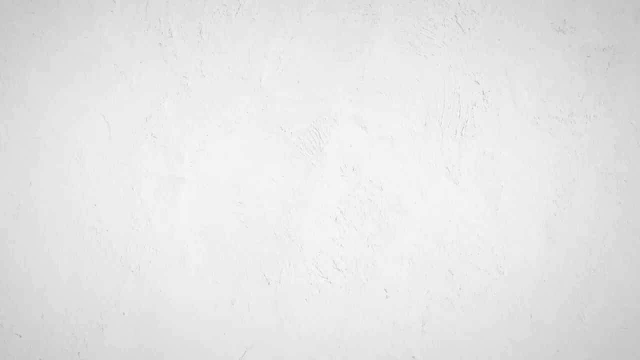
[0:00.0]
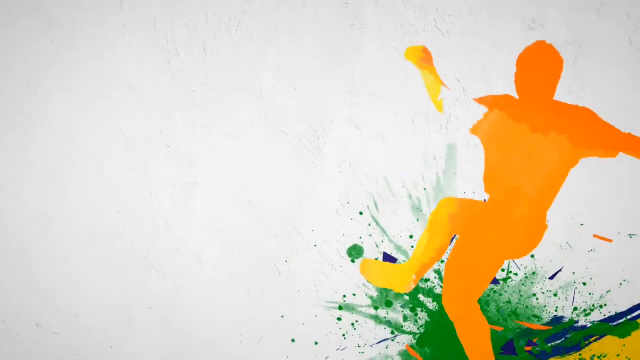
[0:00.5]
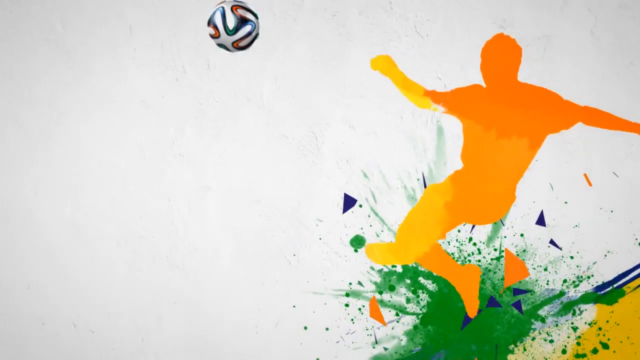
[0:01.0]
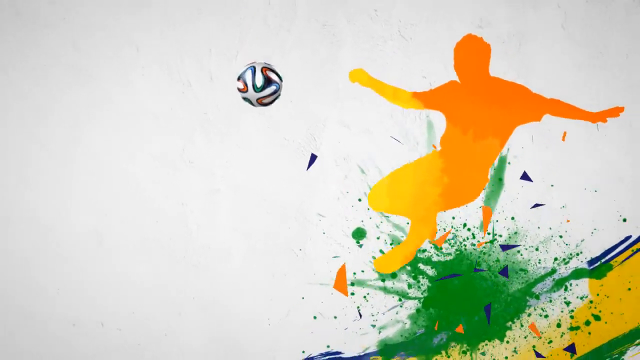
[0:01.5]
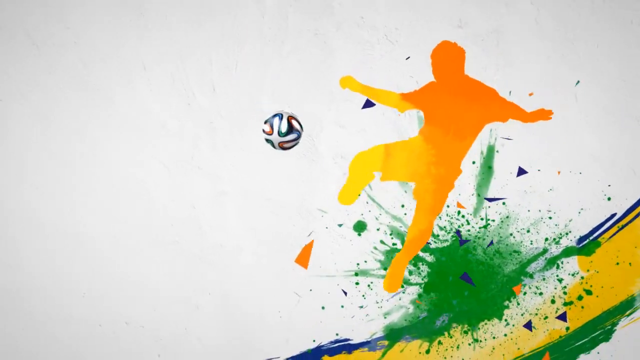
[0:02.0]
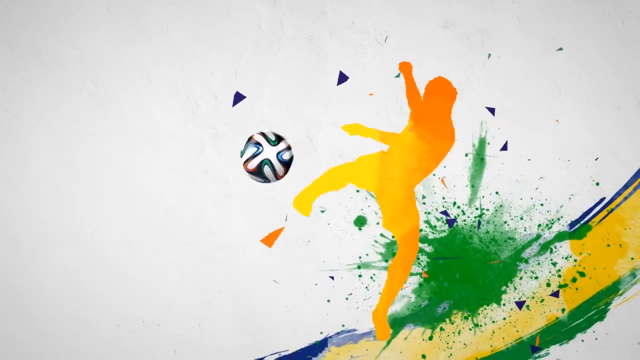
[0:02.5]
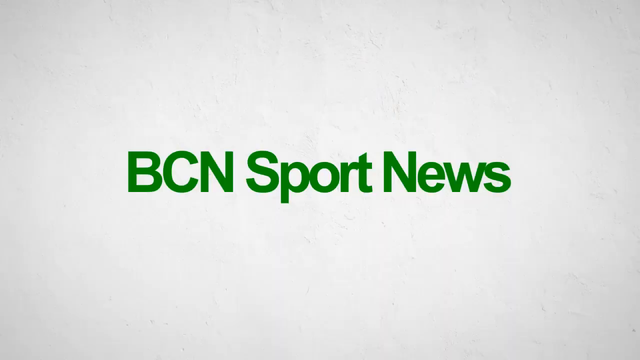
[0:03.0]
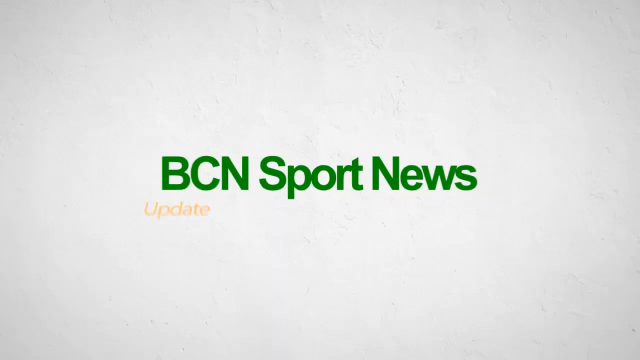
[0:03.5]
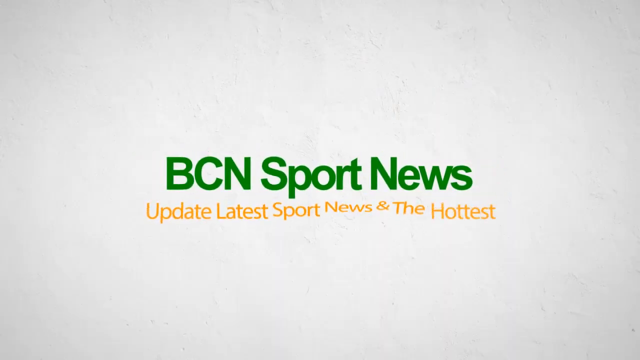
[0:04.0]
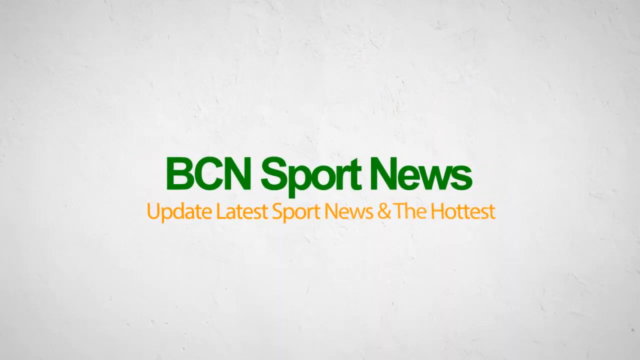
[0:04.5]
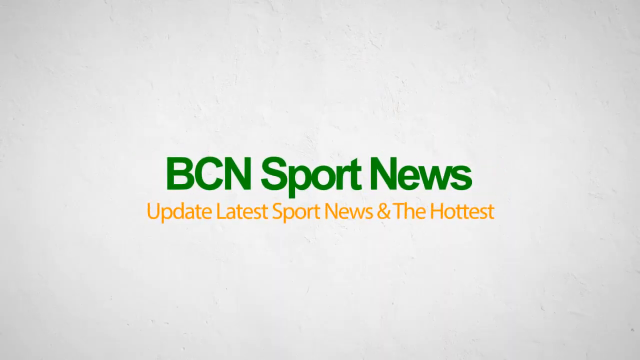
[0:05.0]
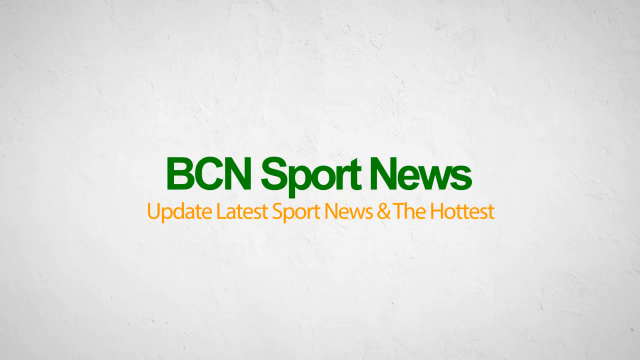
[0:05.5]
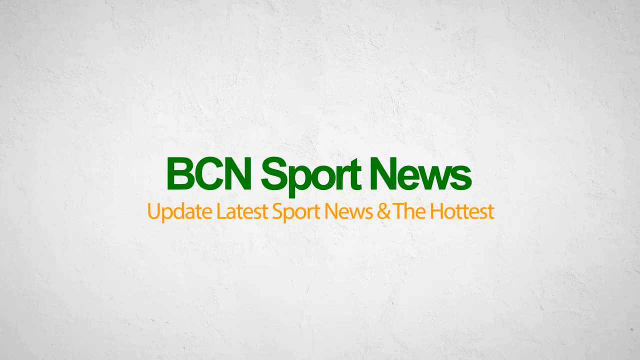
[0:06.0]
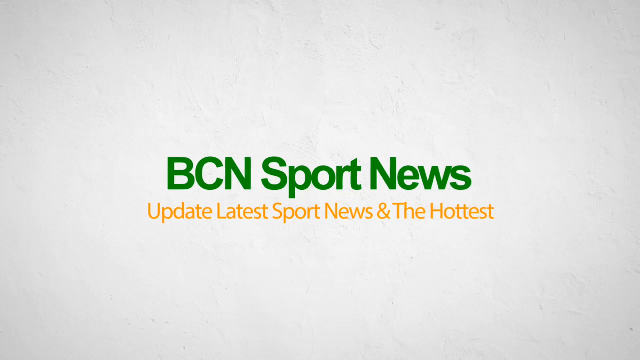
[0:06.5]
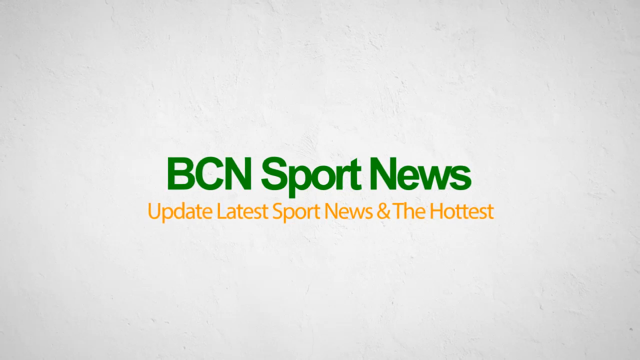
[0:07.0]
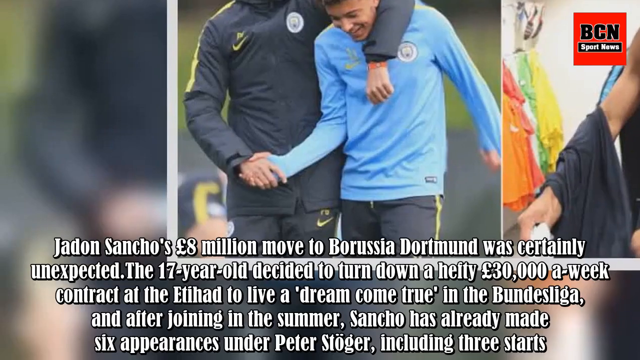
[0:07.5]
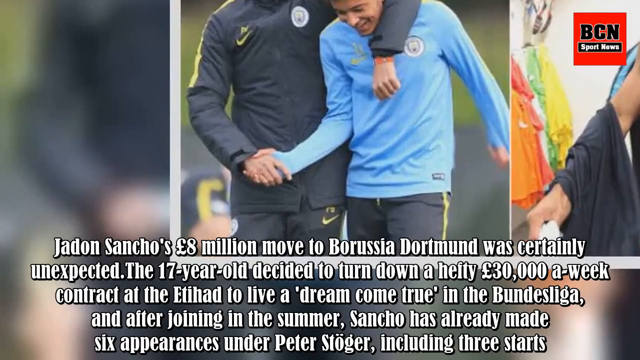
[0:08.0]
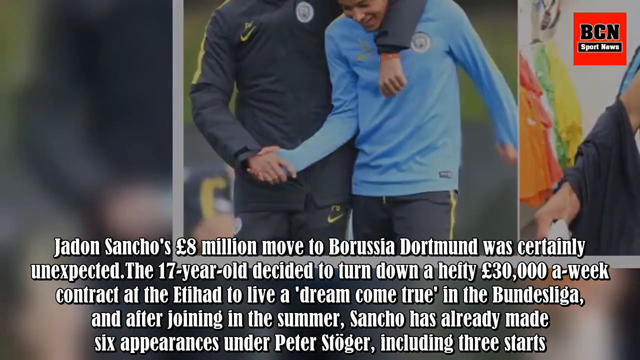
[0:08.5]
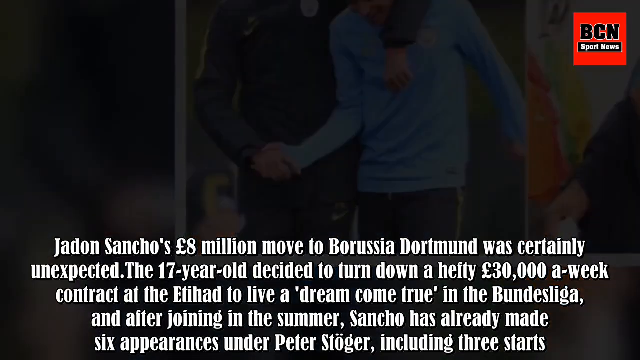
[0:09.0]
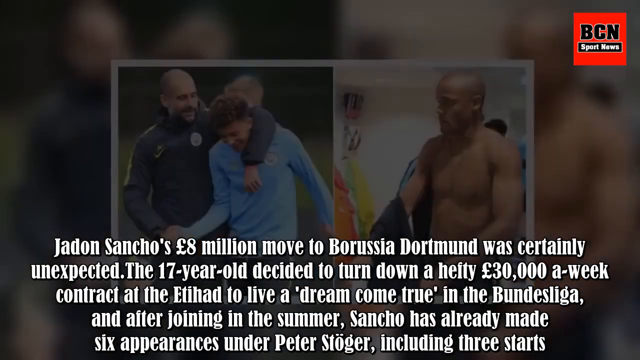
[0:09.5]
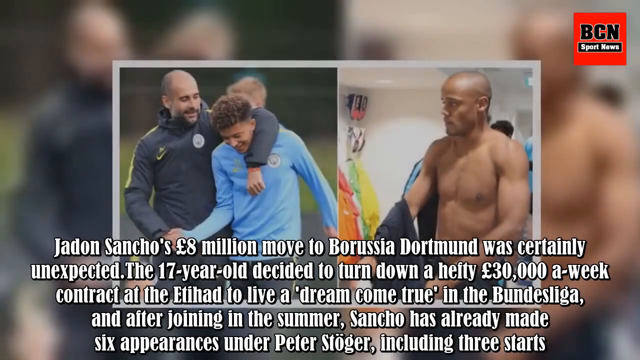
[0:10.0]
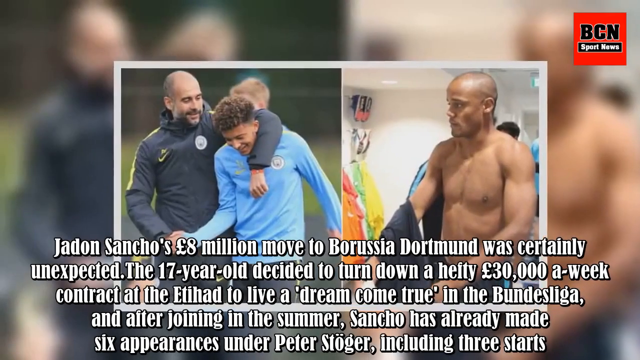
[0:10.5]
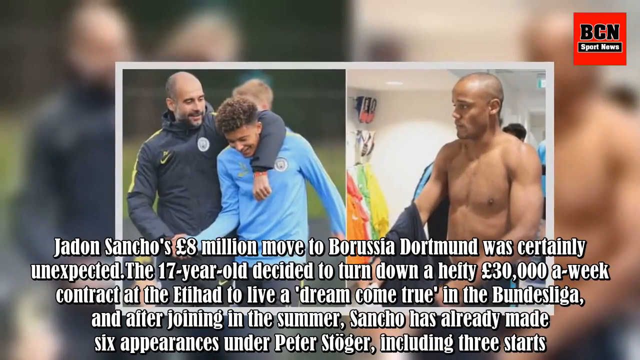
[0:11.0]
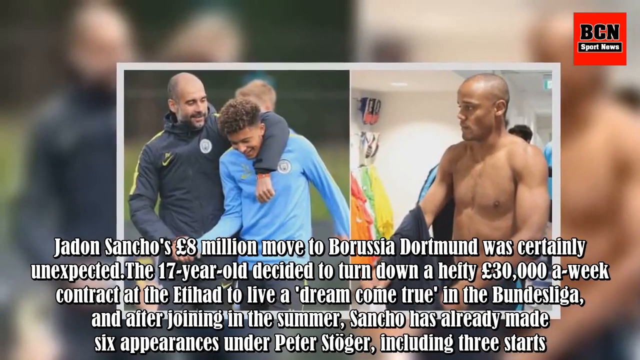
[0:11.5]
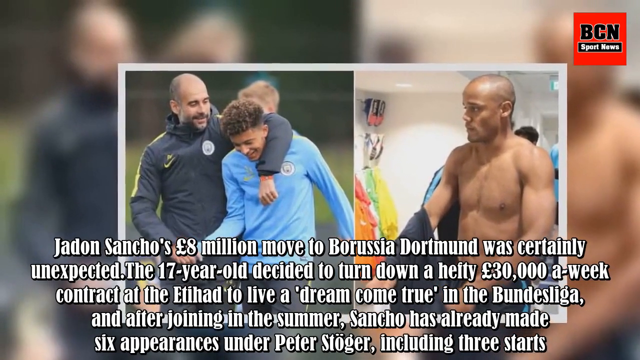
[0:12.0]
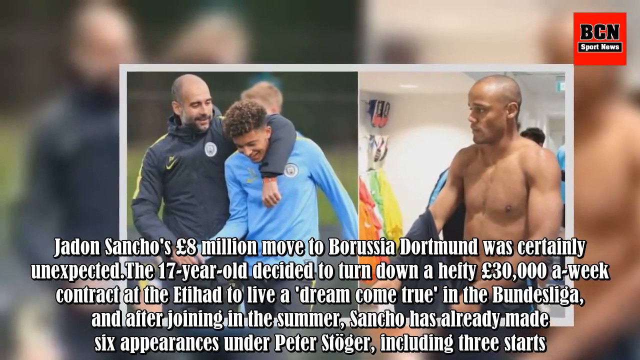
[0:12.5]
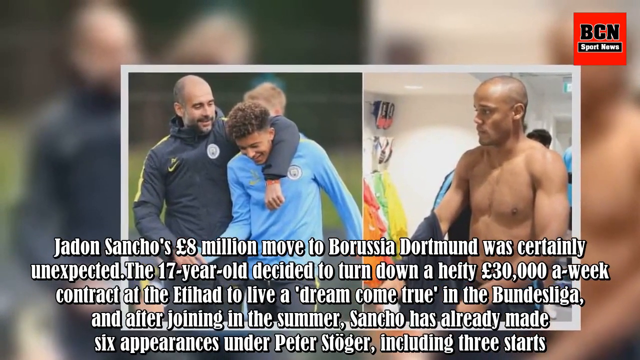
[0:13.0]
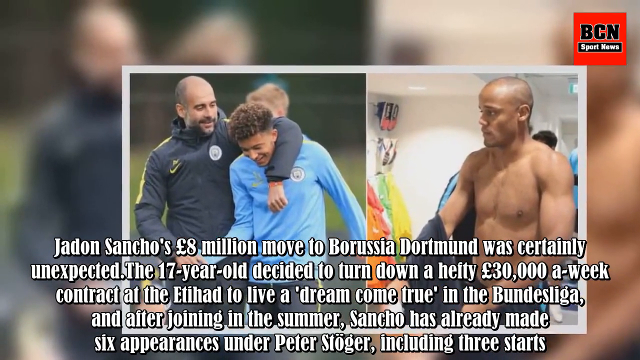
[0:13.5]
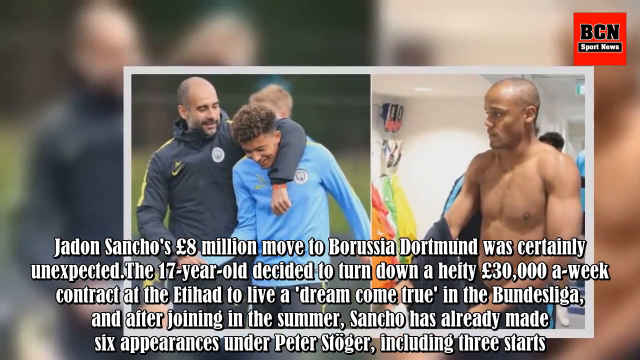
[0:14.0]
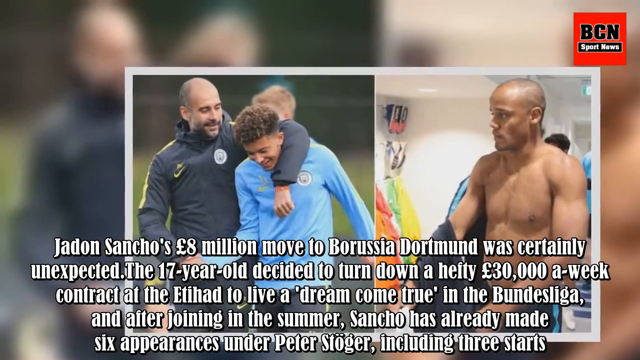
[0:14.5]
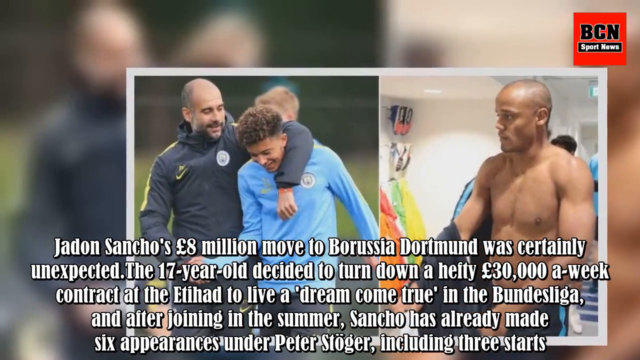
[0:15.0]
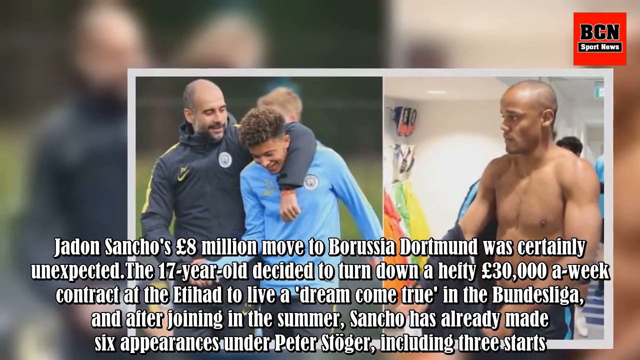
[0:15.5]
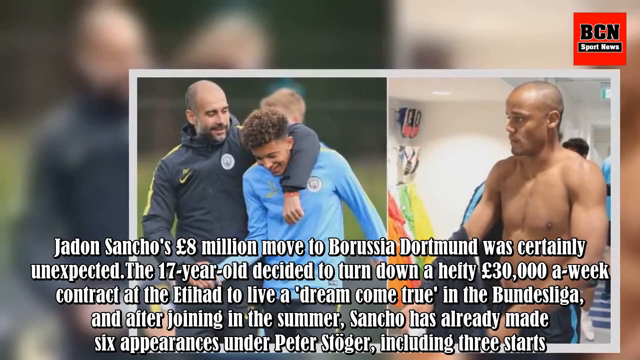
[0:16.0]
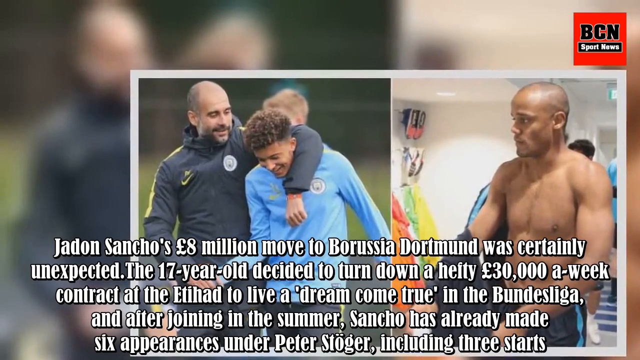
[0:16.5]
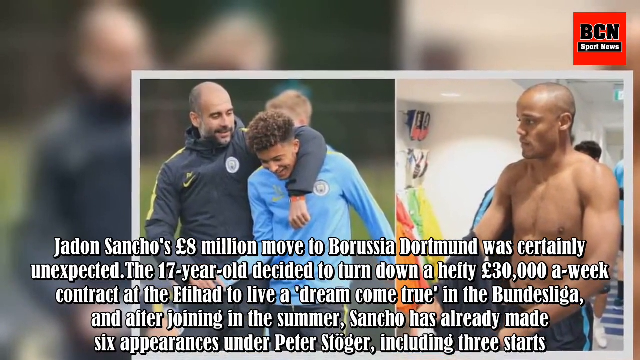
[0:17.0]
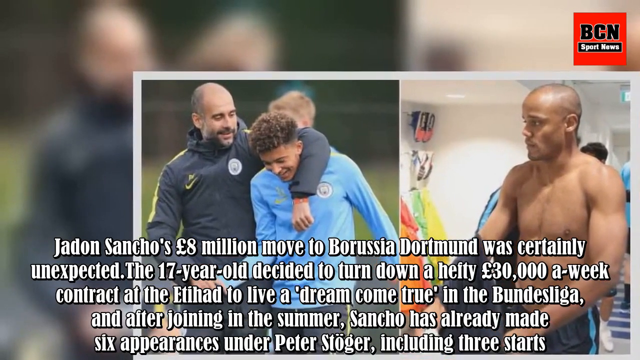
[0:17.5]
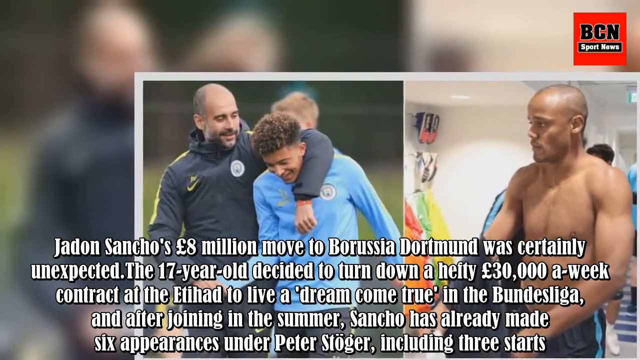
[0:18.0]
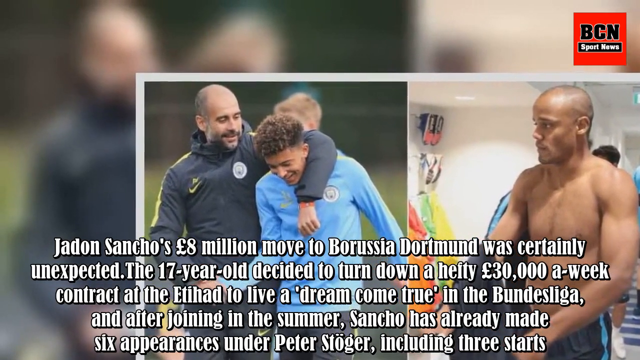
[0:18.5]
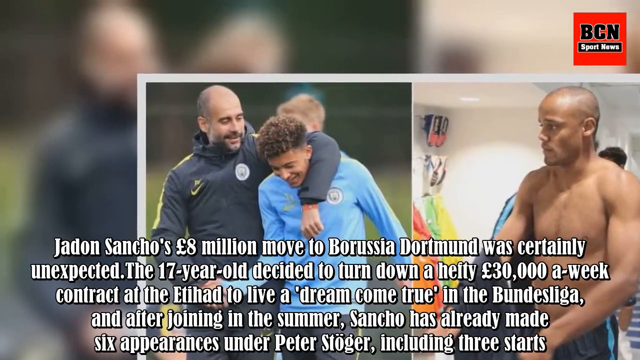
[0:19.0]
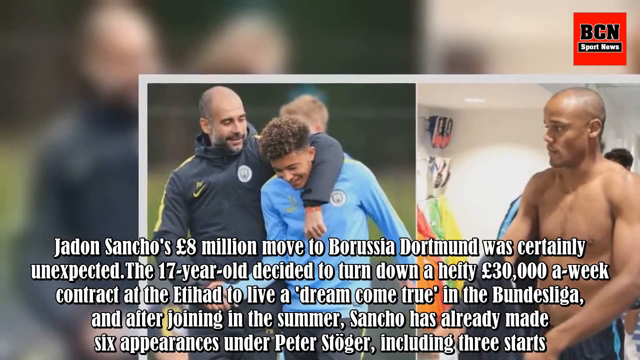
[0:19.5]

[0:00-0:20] A figure that looks somewhat like a silhouette of a soccer player appears, orange instead of black. The player seems to be jumping up and is about to kick a soccer ball; he is mostly orange, and his right leg is yellow. Behind him is a splash of paint that looks green, and on the lower right-hand side there are strokes of yellow paint; the rest of the canvas is white. The figure kicks the ball, which comes flying forward toward the front of the screen and then fades away. Green text appears reading "BCN sports news," and beneath it yellow text reads "update latest sports news and the hottest." The video then cuts to an image of a soccer player shaking the hand of what looks like another soccer player wearing a black outfit, who has his arm over the soccer player in a blue jersey. Beneath the image is white text that looks somewhat like a paragraph describing what is happening in the picture. The camera then sort of zooms out to reveal the whole picture, which looks like a split picture: on the right side is another image of what seems to be a soccer player taking off his shirt.